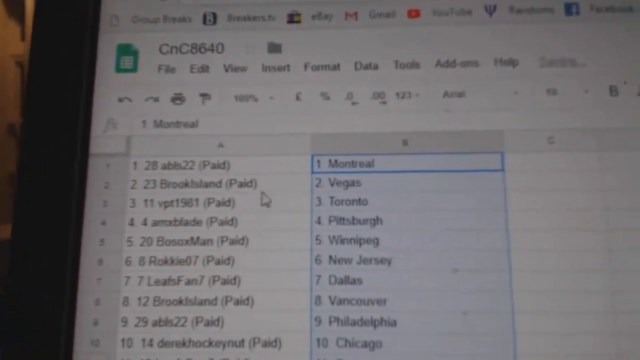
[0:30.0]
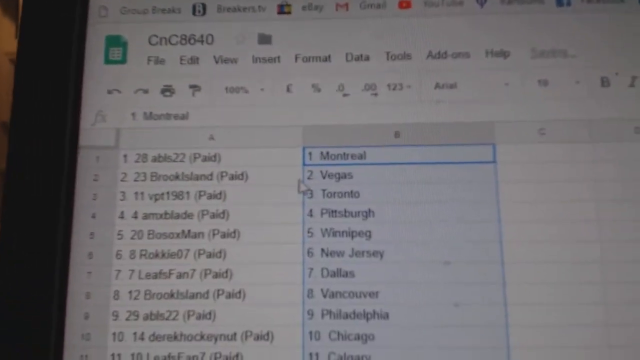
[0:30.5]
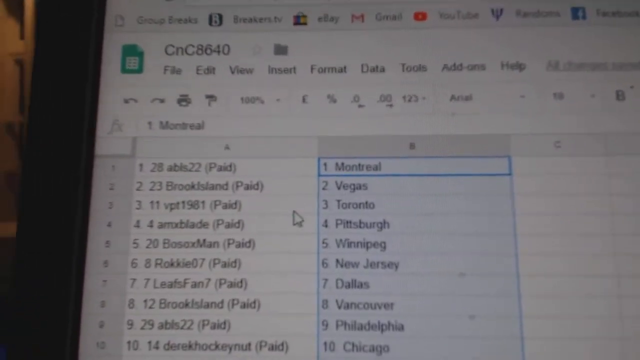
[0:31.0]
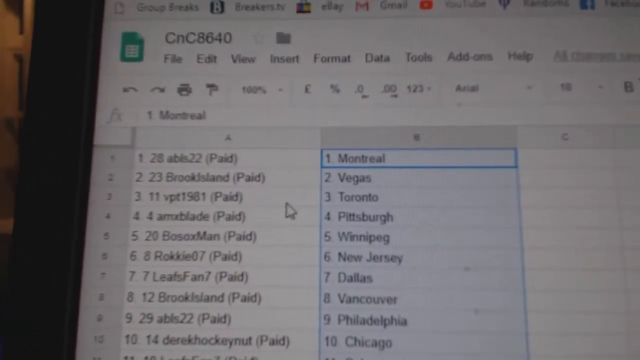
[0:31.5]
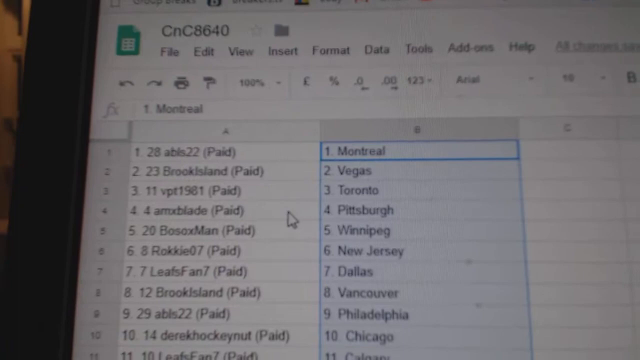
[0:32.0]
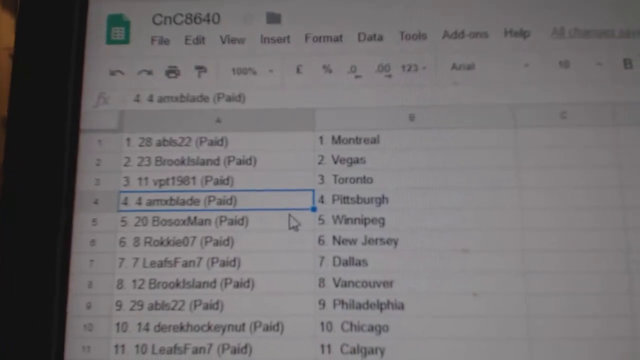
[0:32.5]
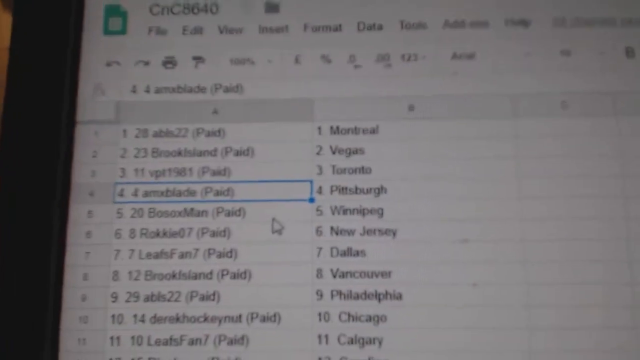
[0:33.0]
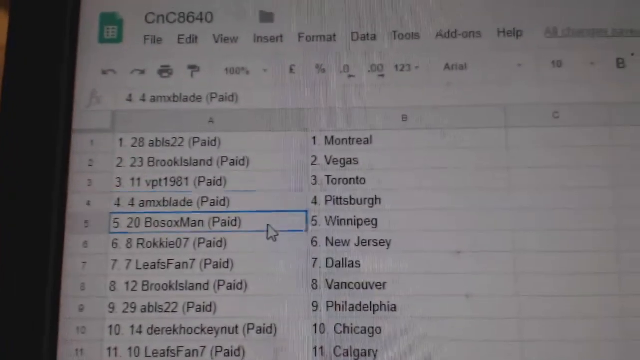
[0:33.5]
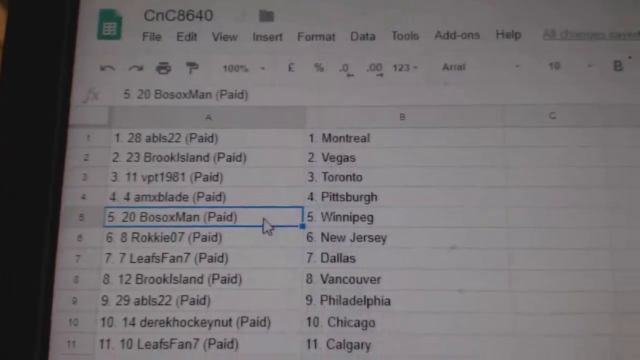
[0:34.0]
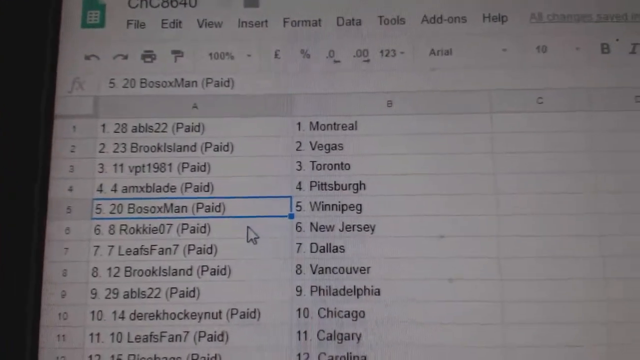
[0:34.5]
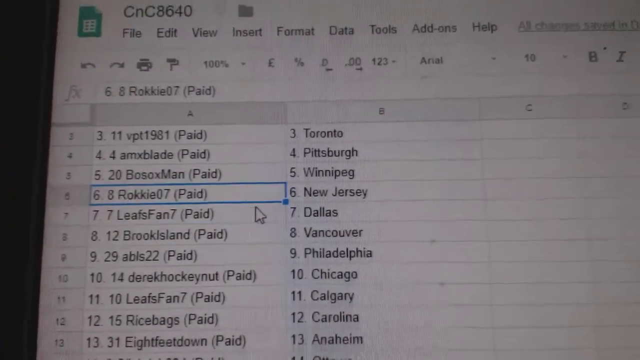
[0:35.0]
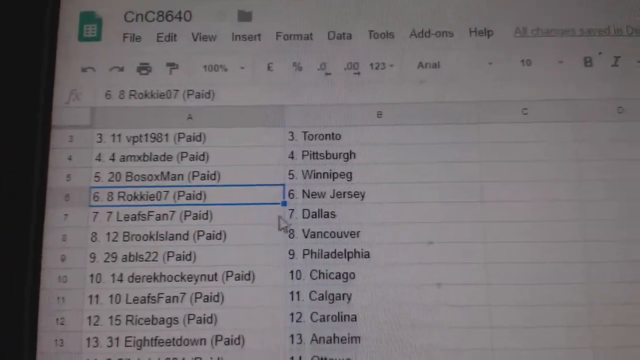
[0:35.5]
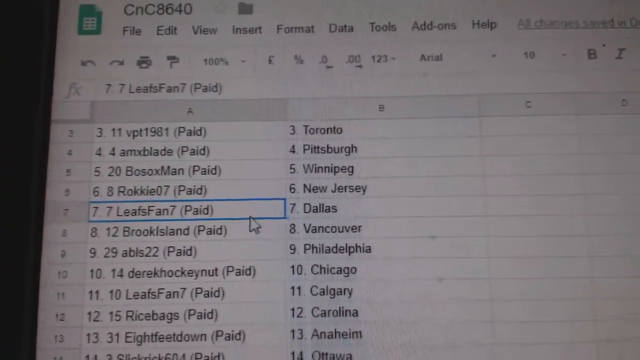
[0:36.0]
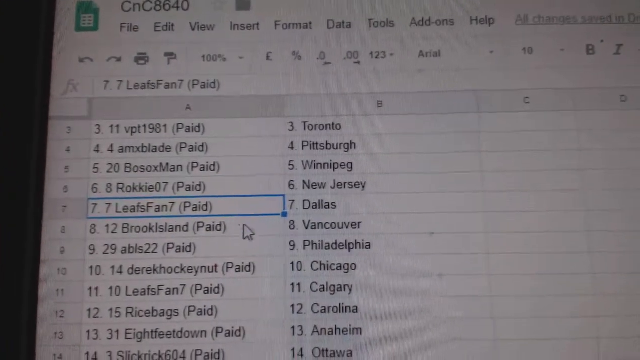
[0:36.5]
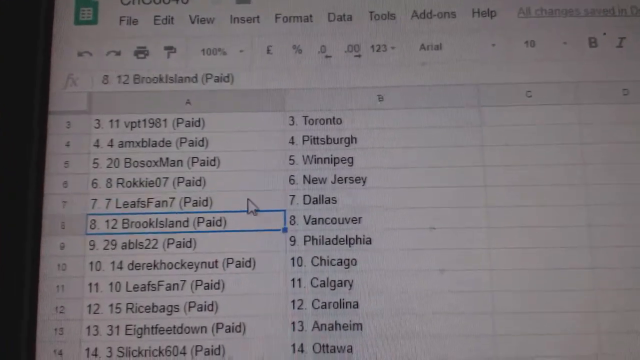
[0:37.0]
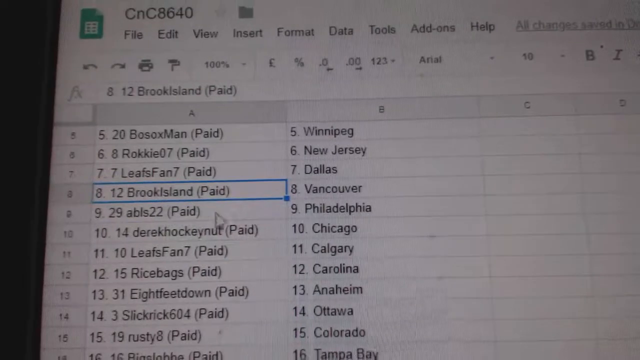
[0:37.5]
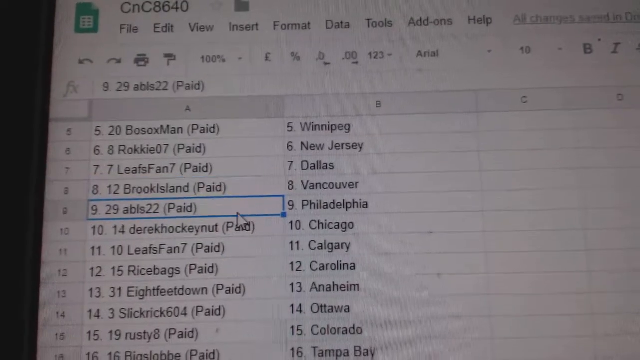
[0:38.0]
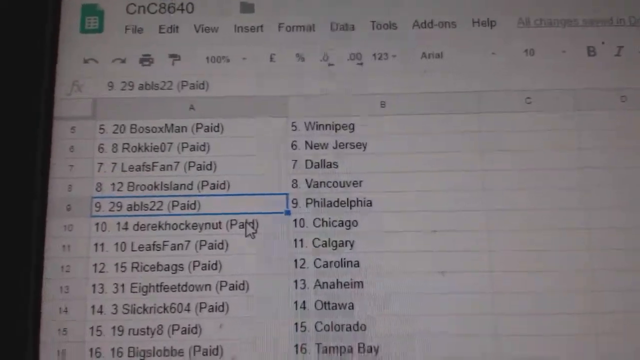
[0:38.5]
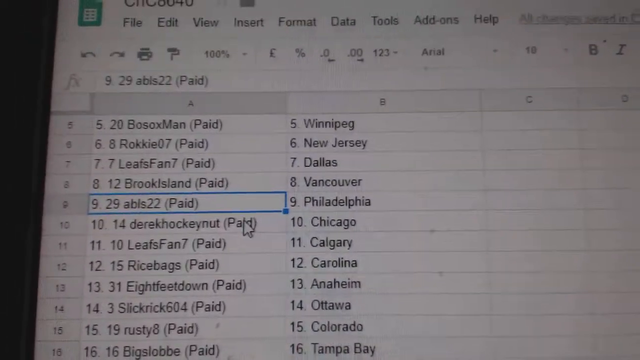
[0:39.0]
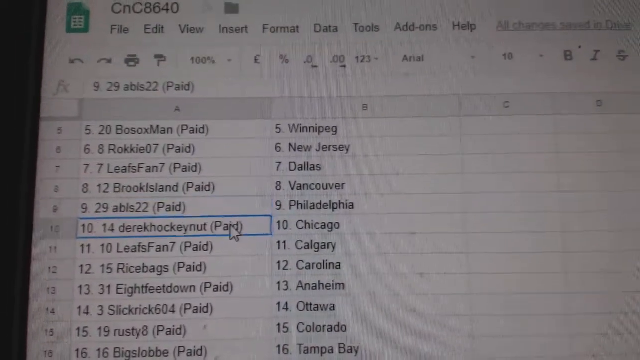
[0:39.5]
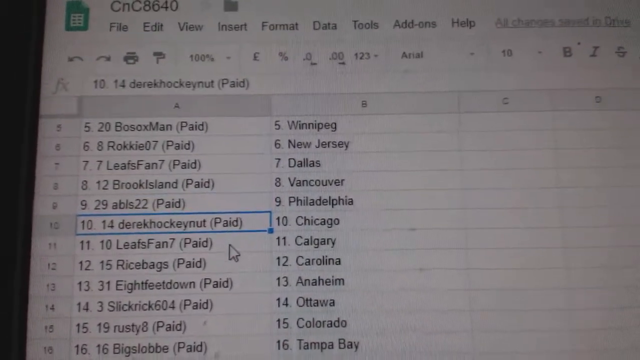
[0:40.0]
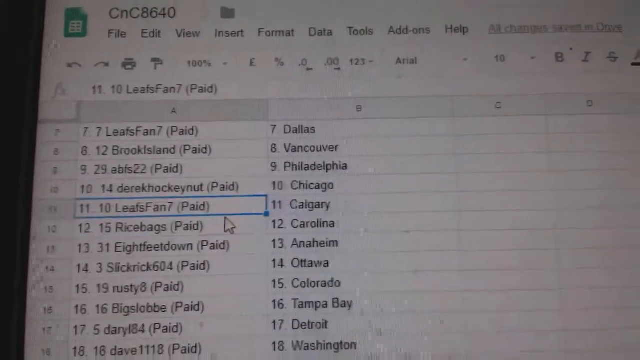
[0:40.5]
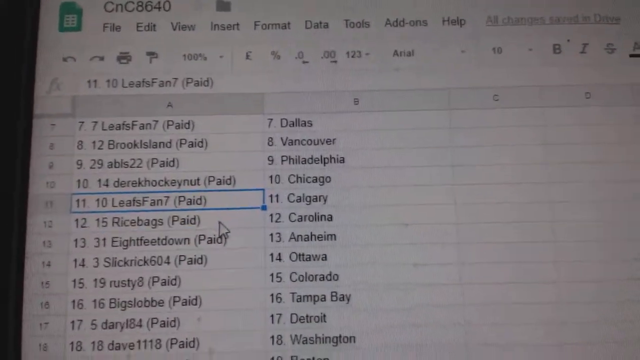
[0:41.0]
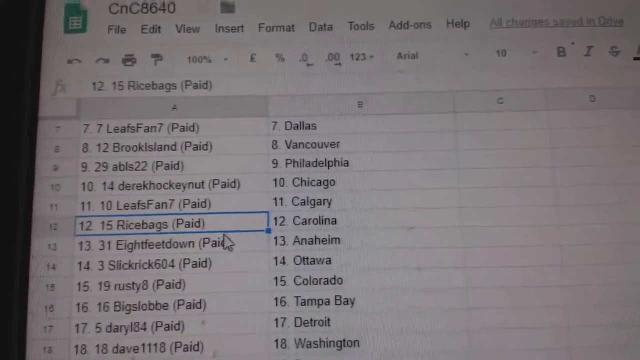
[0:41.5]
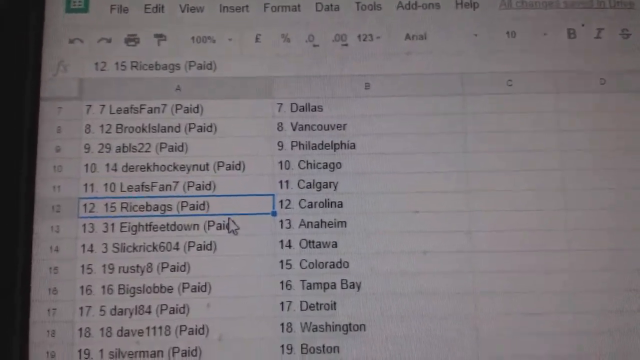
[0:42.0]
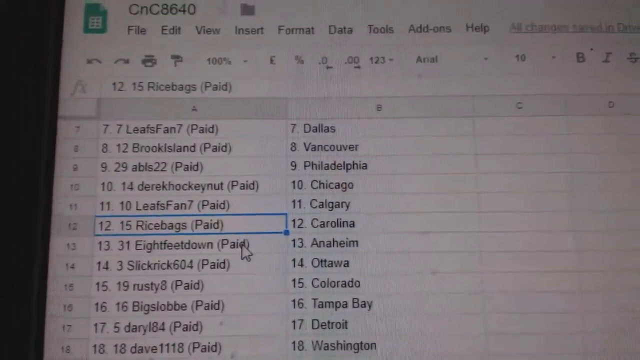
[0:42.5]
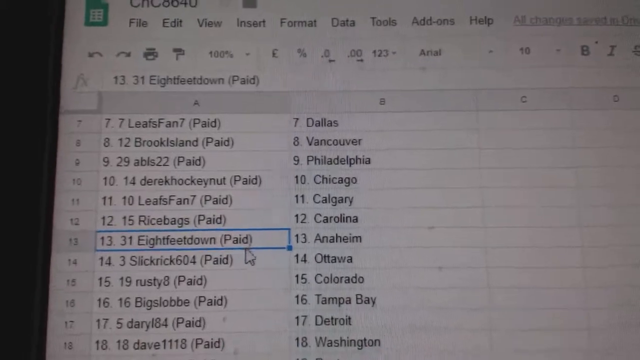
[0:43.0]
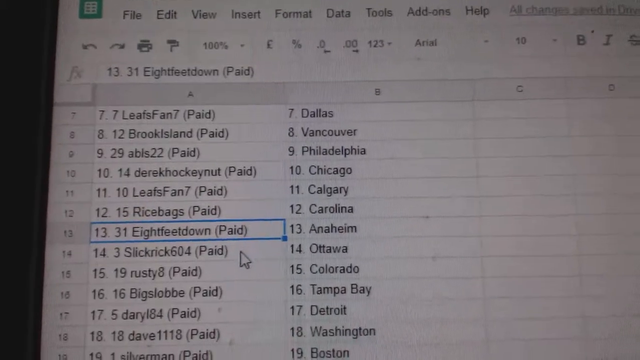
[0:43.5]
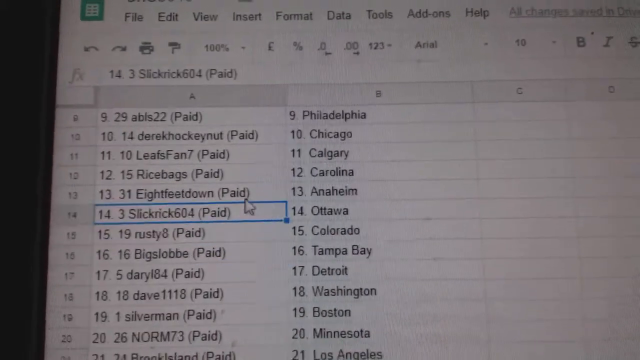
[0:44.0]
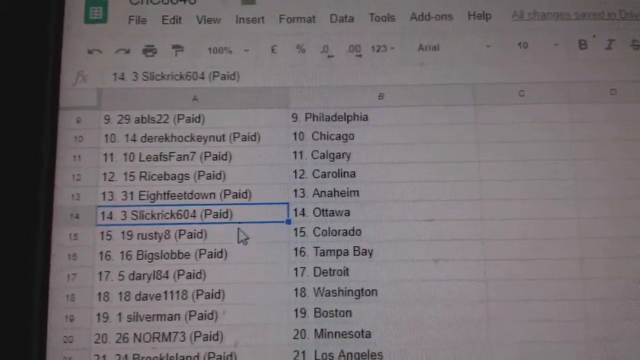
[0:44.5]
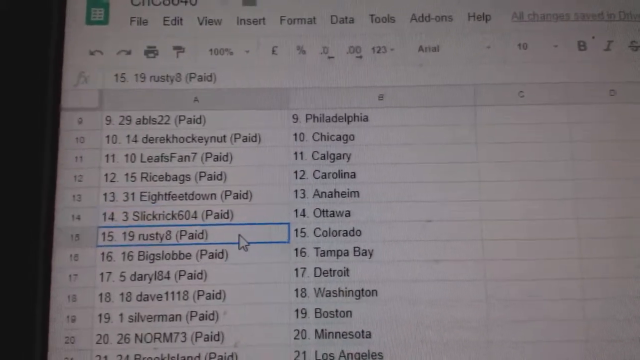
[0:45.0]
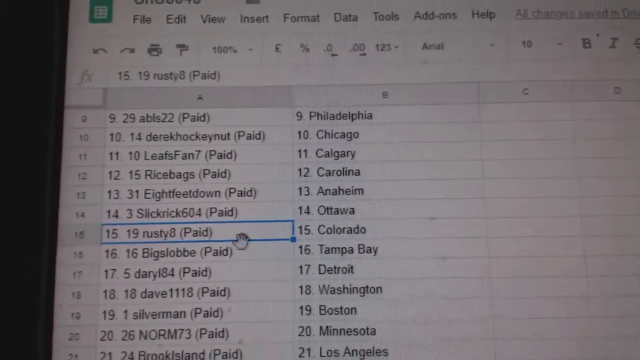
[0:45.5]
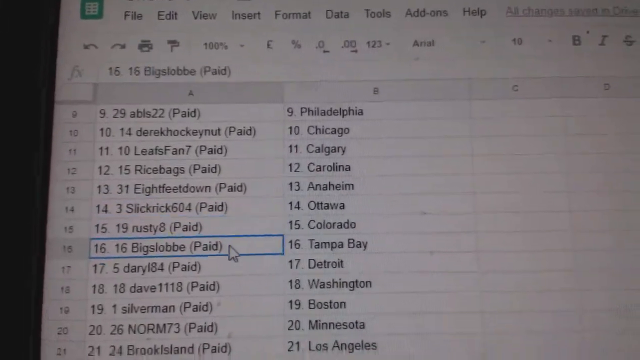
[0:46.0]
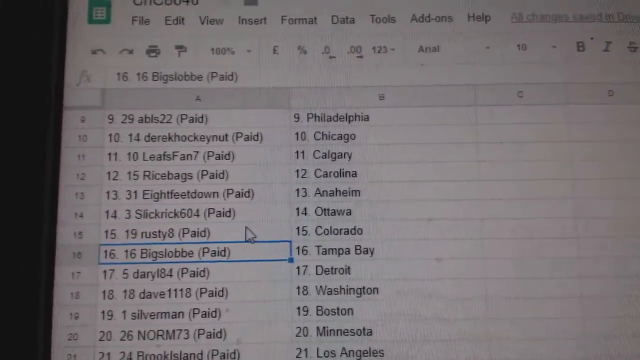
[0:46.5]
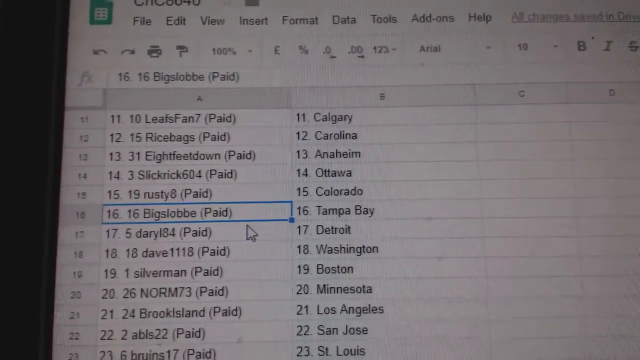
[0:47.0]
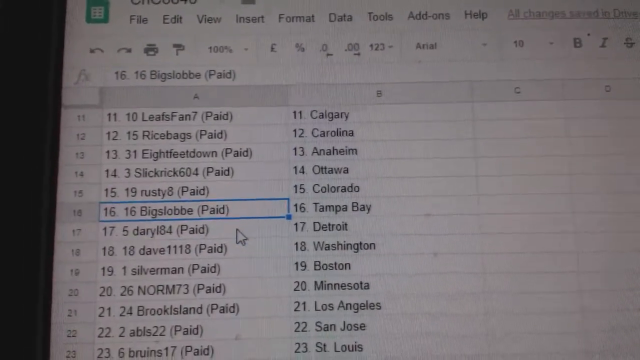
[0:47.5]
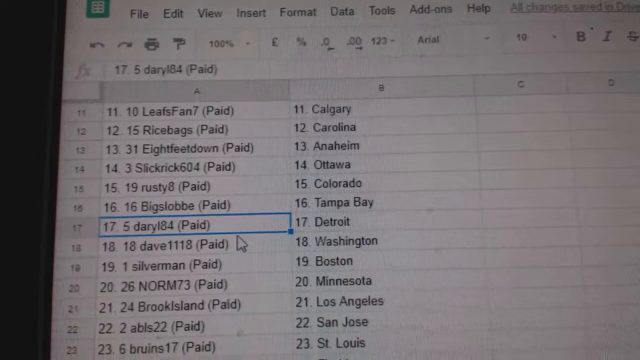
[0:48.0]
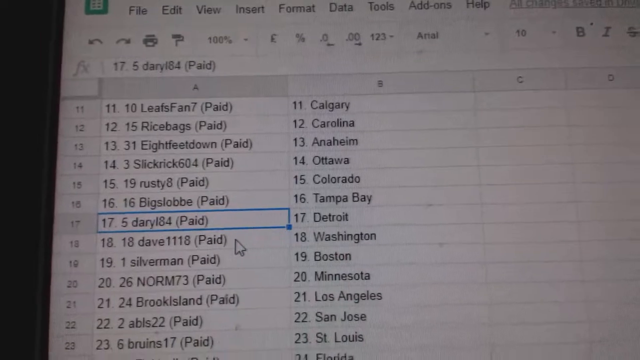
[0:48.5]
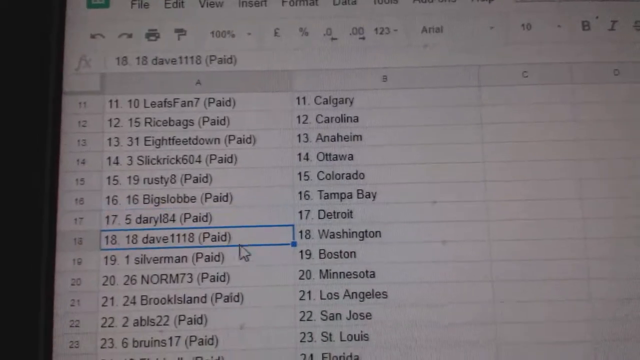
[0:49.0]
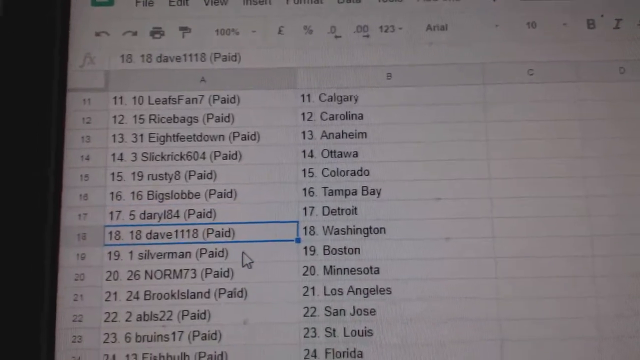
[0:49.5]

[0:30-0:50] A very blurry video appears to be filming a monitor showing an open Google Sheet named "cnc 8640" at the top left. The sheet appears to have a column A and a column B, both containing lists of names, numbered 1 through 10 downward. Column A reads "1 28 abb 22 paid", "2 23 brook island paid", "3 11 vpt 1981 paid", and so on. The B column is highlighted in blue and reads "1 montreal 2 vegas 3 toronto 4 pittsburgh 5 winnipeg 6 new jersey 7 dallas 8 vancouver 9 philadelphia 10 chicago". A white mouse cursor clicks the fourth entry in column A, then each following entry in turn: the fifth, sixth, seventh, eighth, ninth, 10th, 11th and 12th. Each clicked cell is highlighted in blue with a blue line around it. The 13th entry reads "8 feet down paid" and the 14th reads "3 slick rich 604". The cursor continues to the 15th and 16th entries, scrolls down to the 17th and 18th, then clicks the 19th, apparently selecting each individual cell in column A from number four onward.